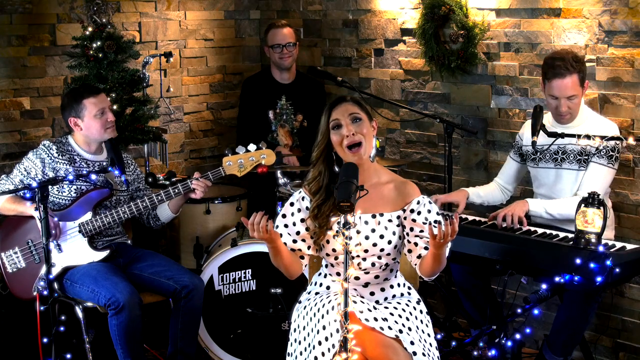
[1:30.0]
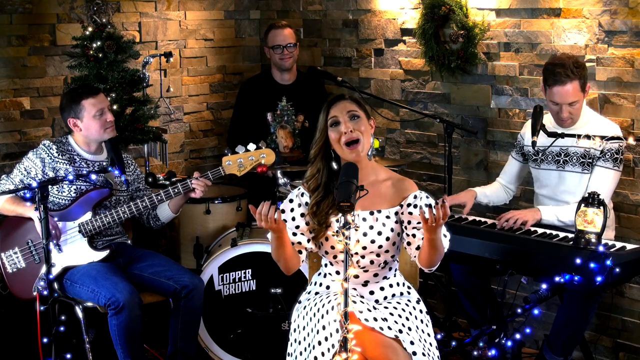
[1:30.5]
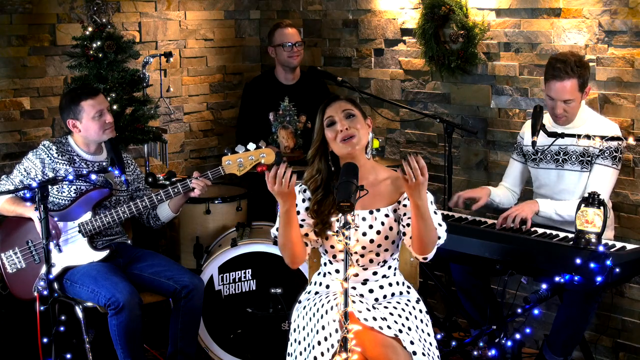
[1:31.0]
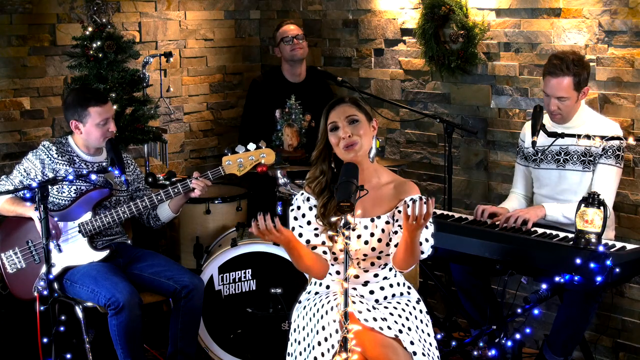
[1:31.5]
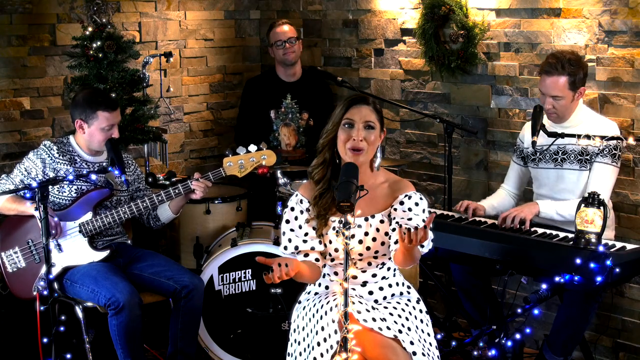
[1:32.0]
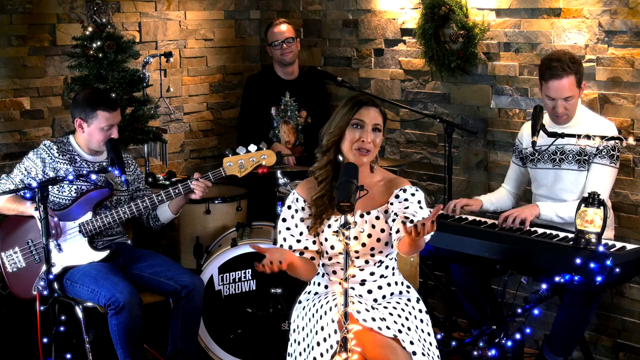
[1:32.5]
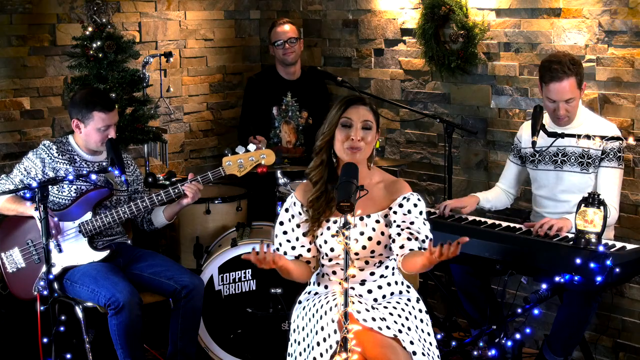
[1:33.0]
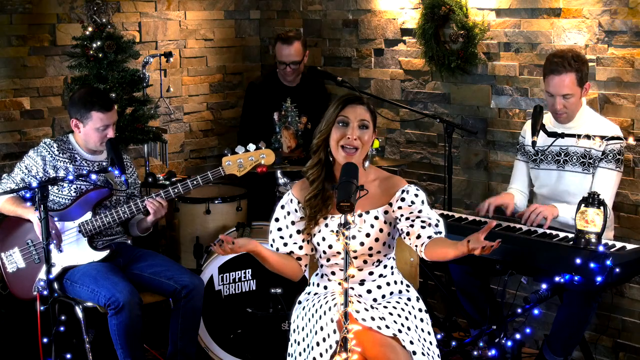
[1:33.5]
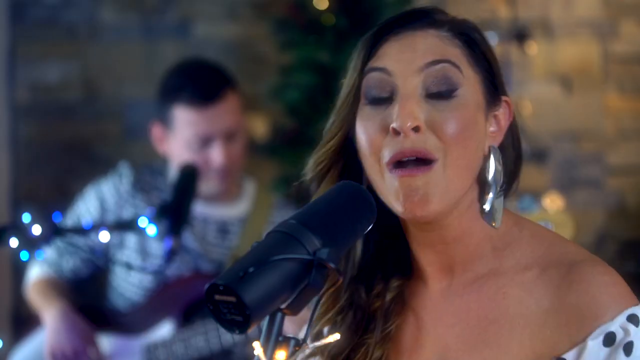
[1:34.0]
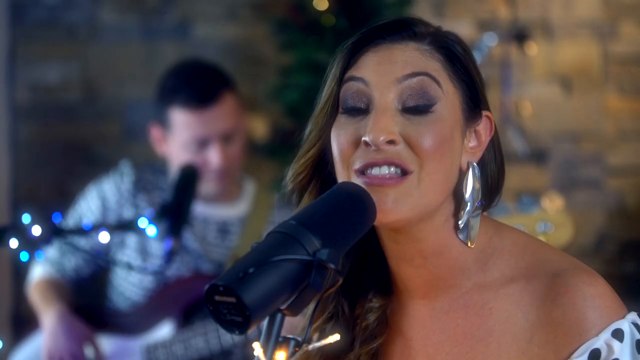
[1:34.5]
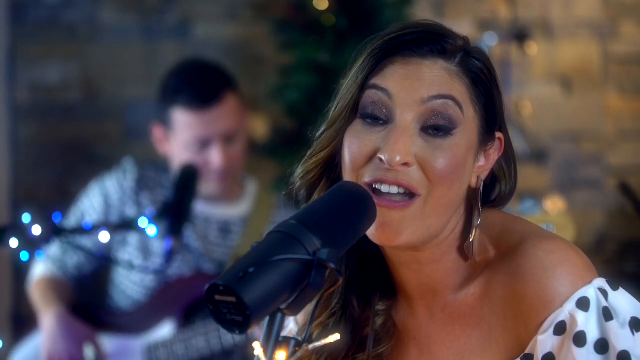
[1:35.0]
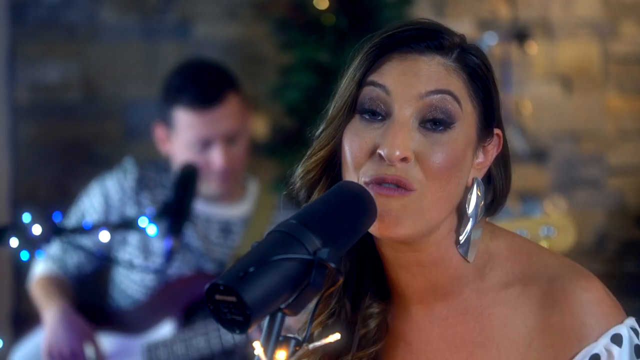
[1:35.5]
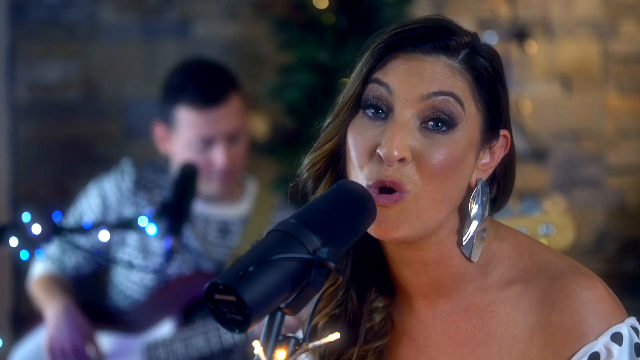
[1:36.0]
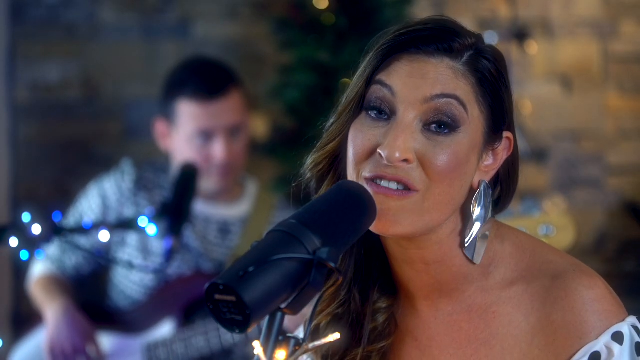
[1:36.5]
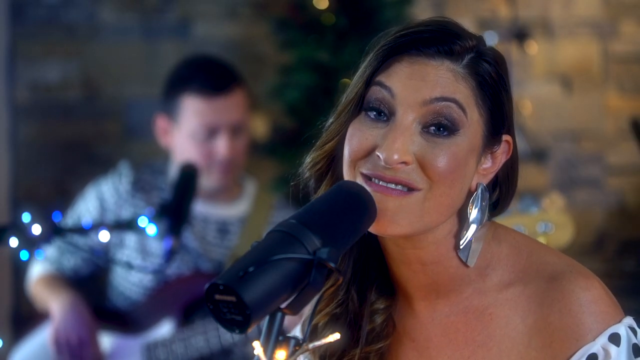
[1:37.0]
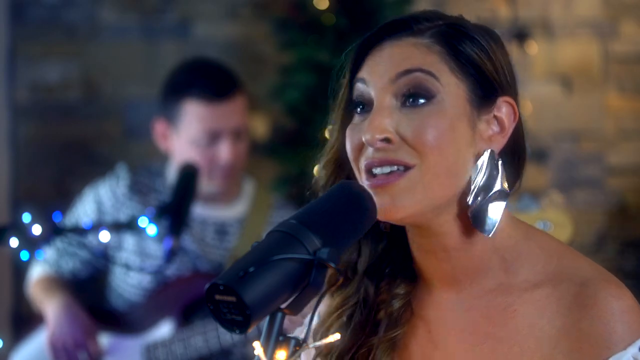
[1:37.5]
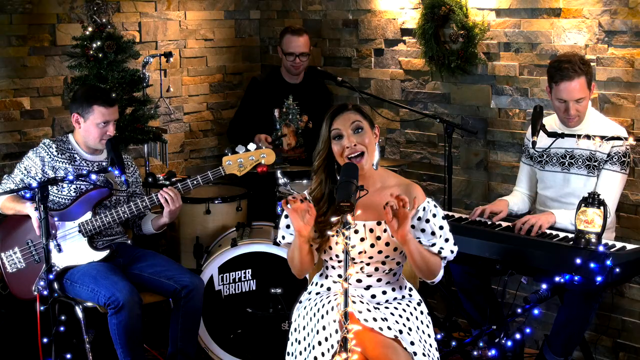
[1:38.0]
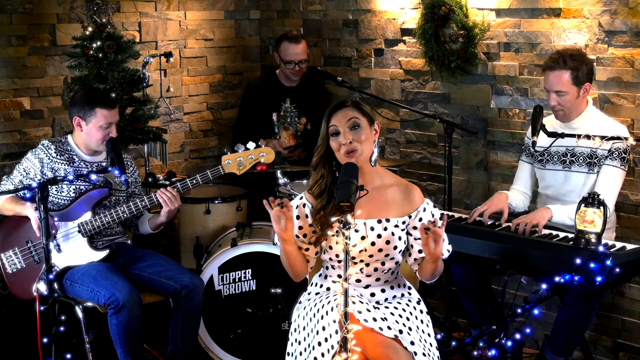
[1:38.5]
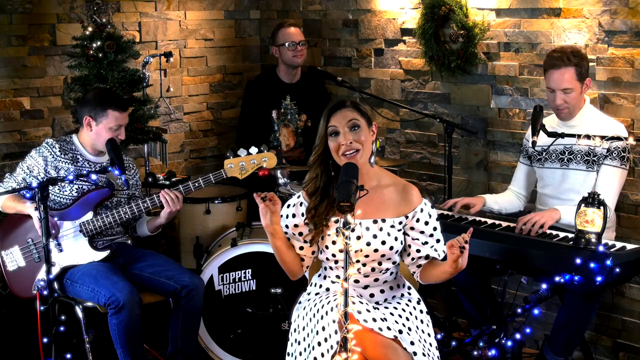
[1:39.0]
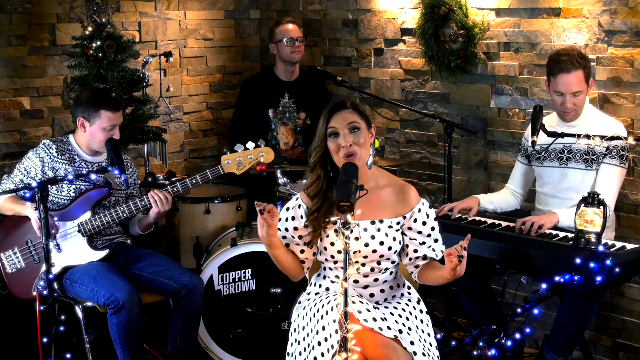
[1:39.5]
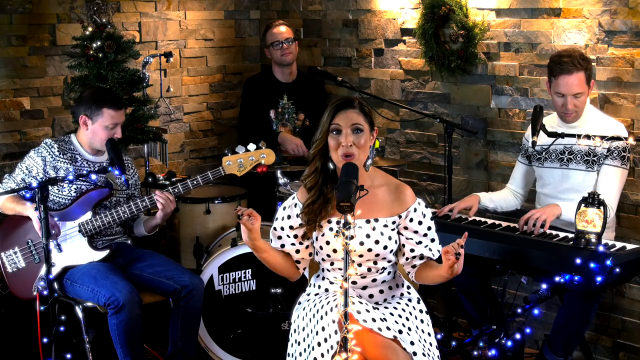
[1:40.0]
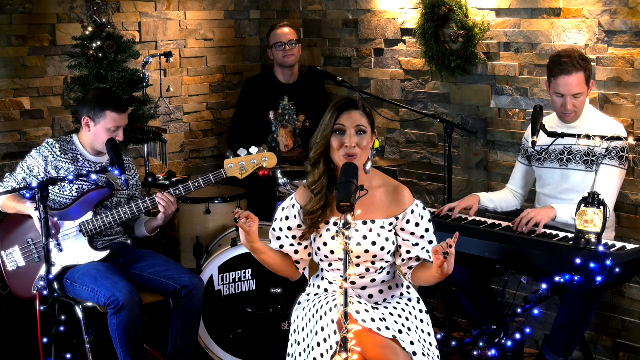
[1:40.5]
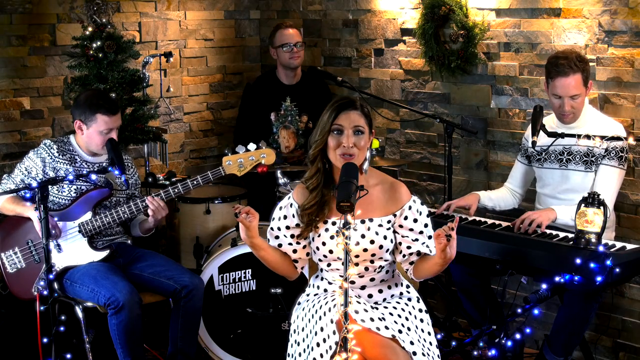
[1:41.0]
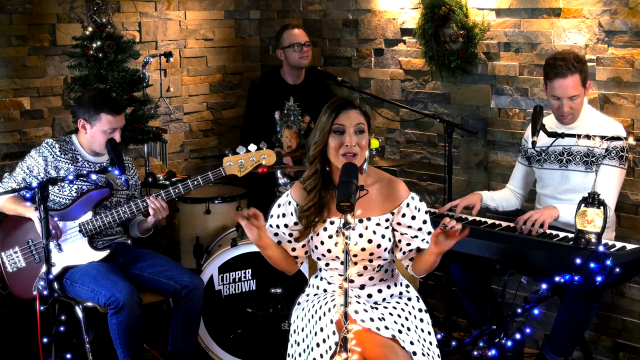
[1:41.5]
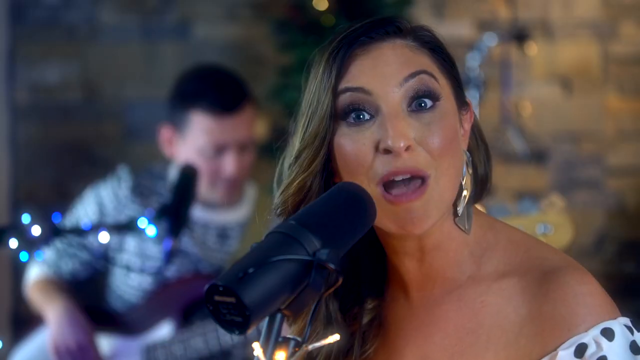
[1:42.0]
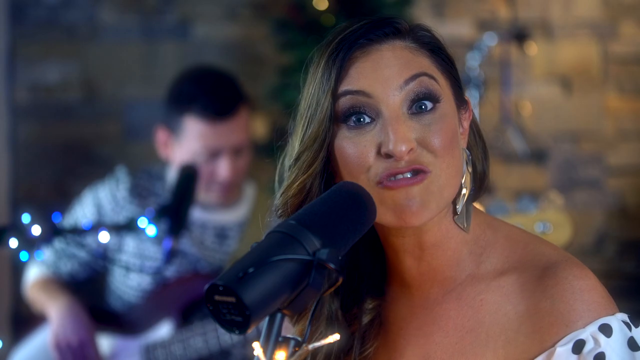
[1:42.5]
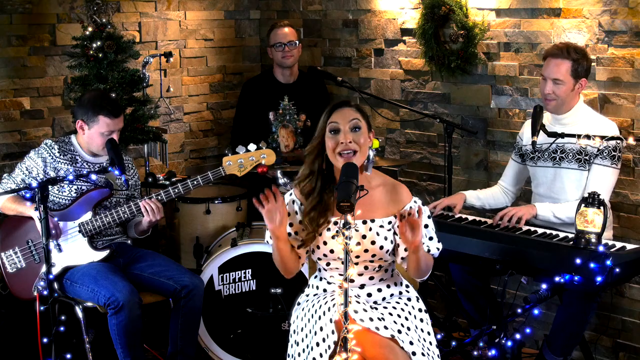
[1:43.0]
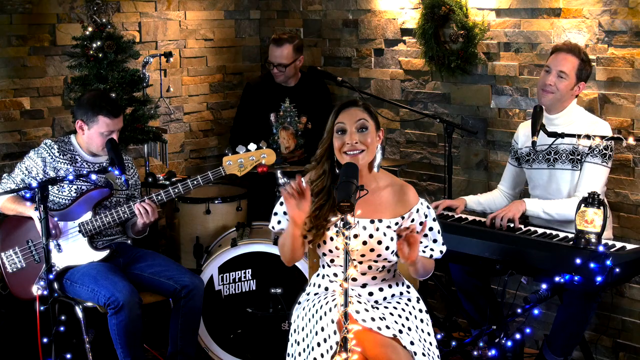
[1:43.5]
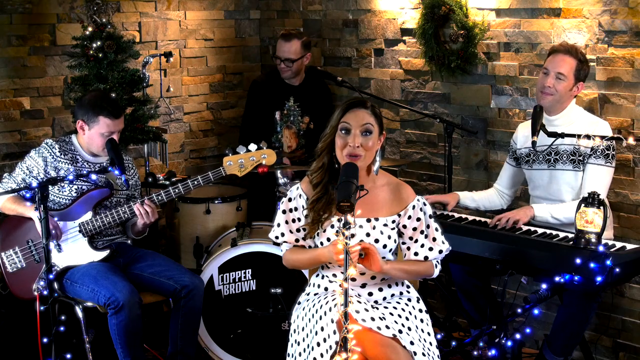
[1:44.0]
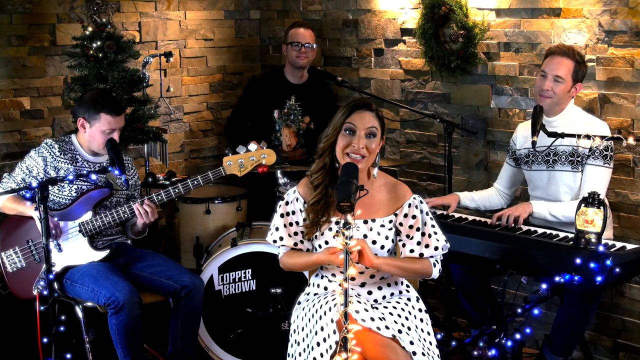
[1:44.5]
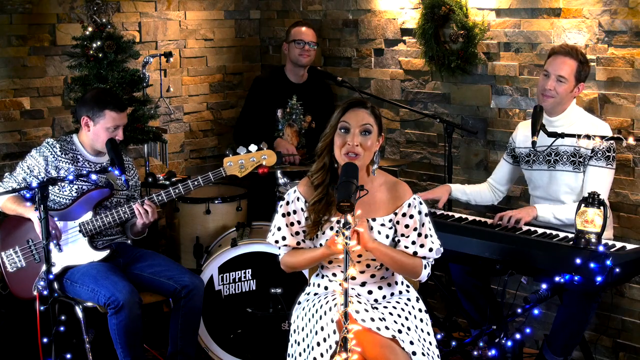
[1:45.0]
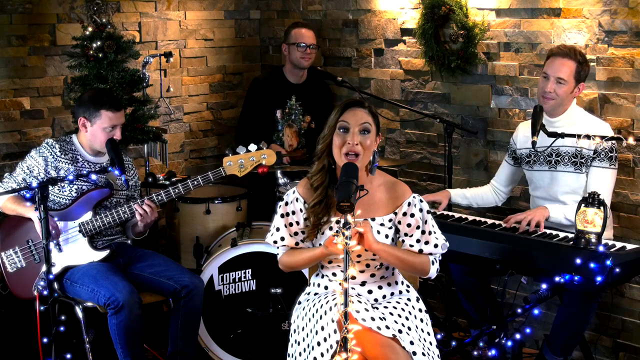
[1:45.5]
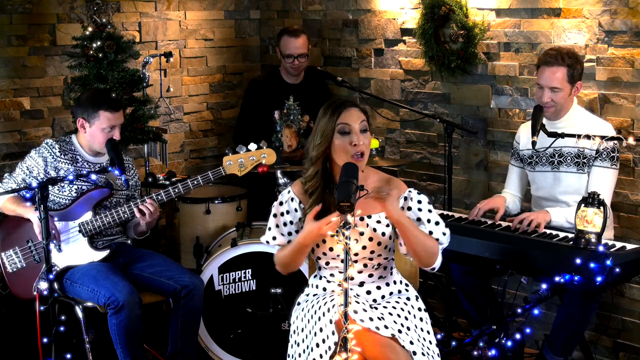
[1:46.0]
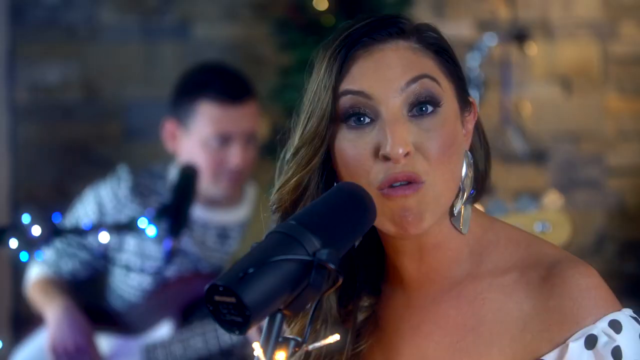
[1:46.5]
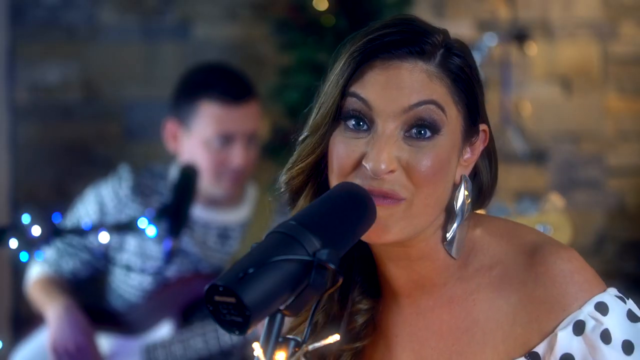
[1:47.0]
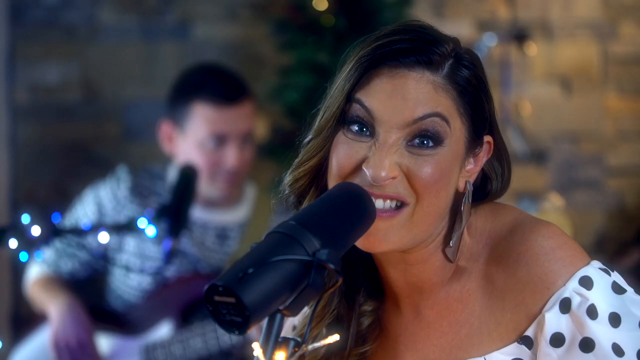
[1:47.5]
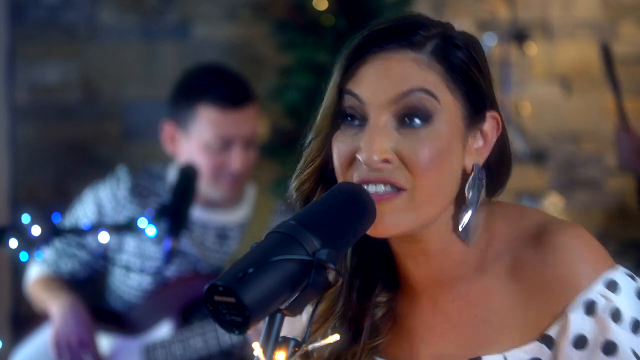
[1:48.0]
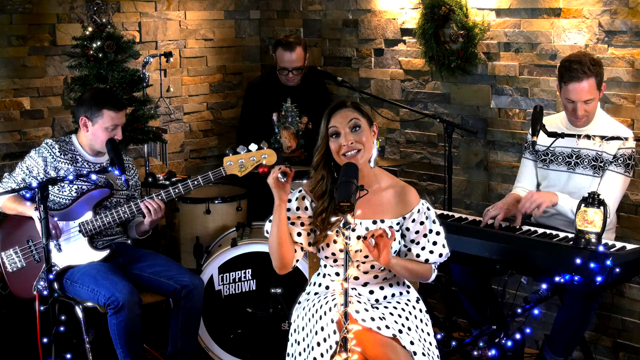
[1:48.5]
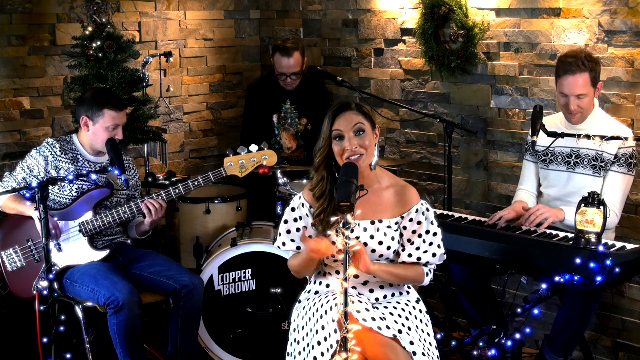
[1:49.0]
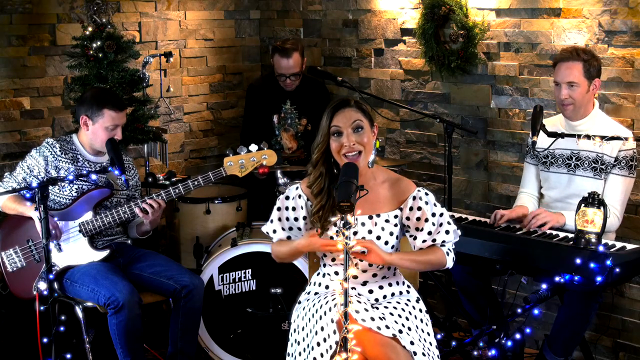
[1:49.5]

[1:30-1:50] Four musicians are performing on a stage in a room. The woman in the front, the only female, is a singer, seated with a microphone on a microphone stand in front of her. There is a male guitarist, a drummer on a drum kit at the back of the group, and a man to the right playing a keyboard. It looks like wintertime: the two men in the middle, the keyboardist and the guitar player, wear festive-looking sweaters. When she sings, the woman uses her hands a lot, putting them out to the side and holding them up while singing her notes. She turns her head to the side a lot, and the video cuts to a different camera angle of her singing. She wears a lot of makeup and is very expressive. The rest of the group seems chirpy, all smiling and seeming happy to play their instruments.